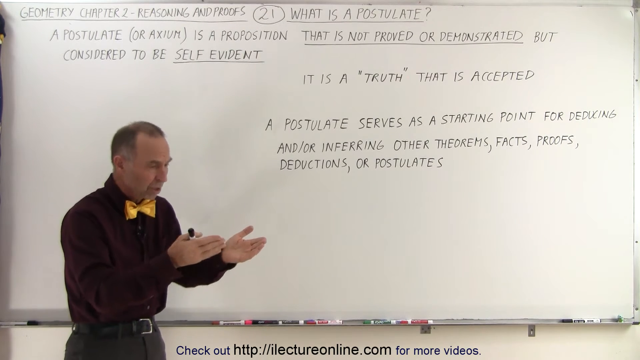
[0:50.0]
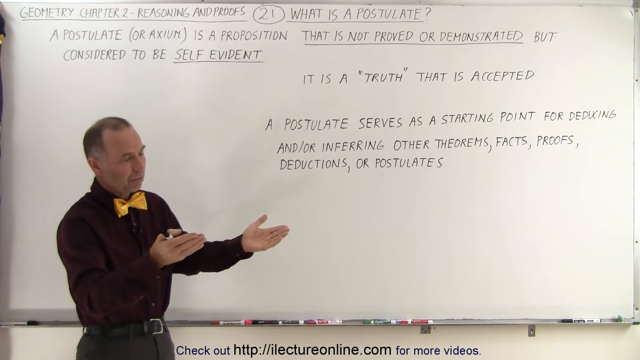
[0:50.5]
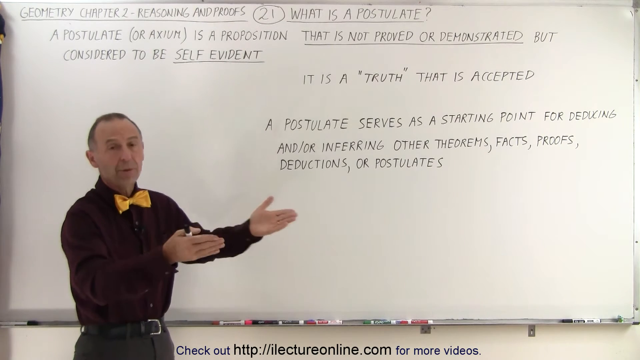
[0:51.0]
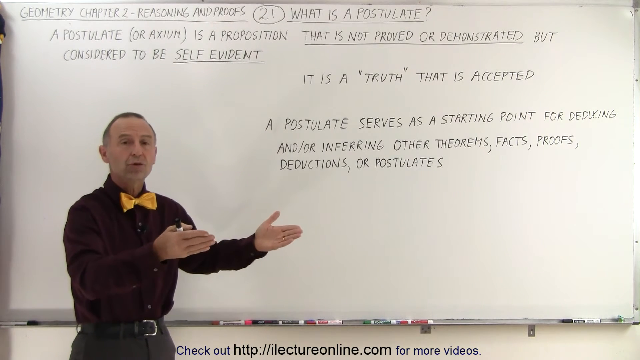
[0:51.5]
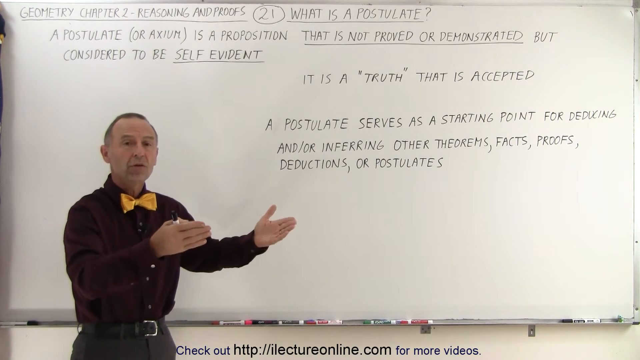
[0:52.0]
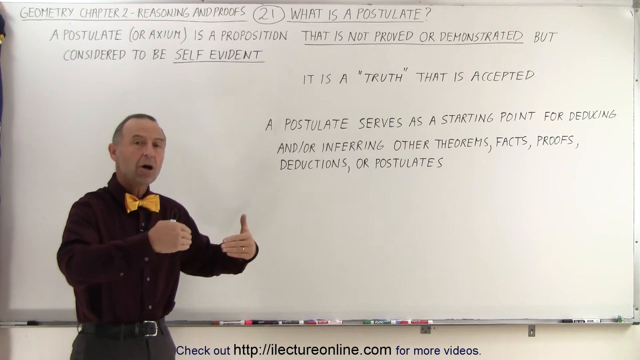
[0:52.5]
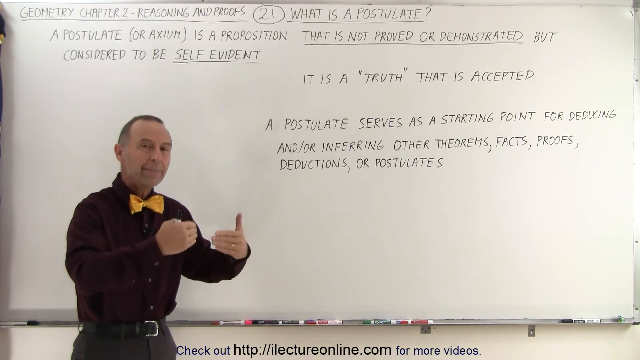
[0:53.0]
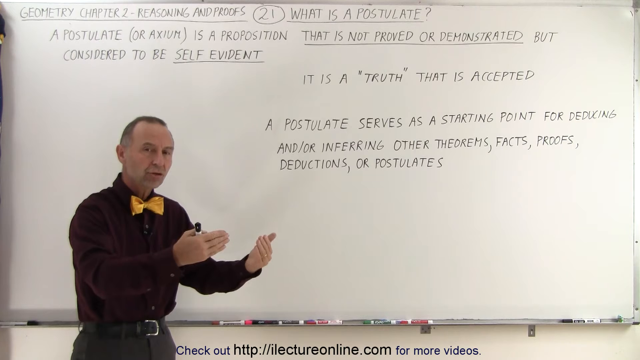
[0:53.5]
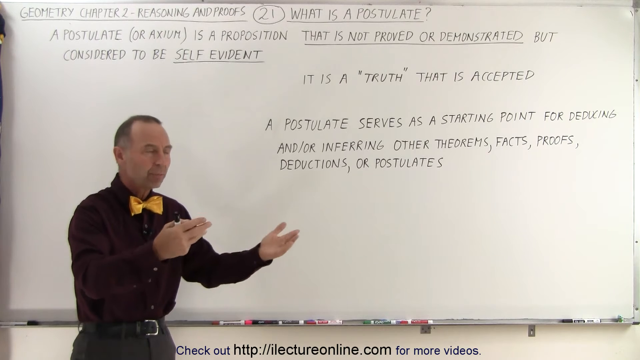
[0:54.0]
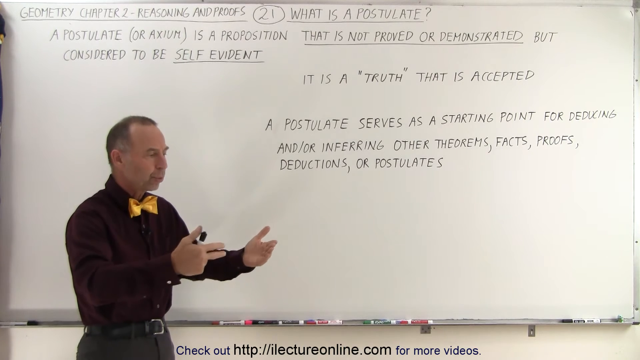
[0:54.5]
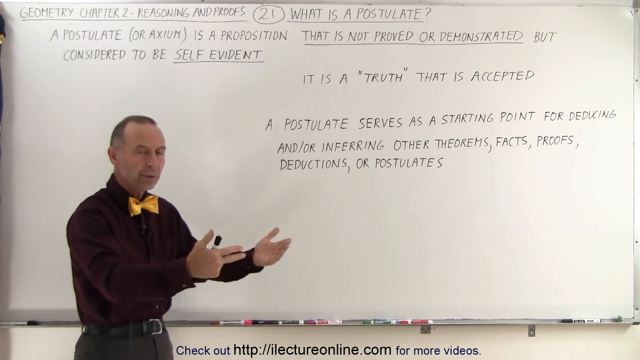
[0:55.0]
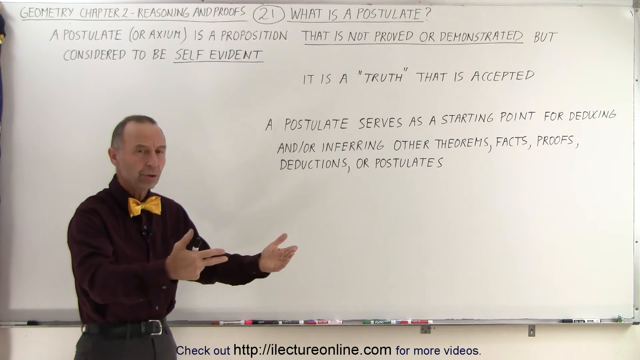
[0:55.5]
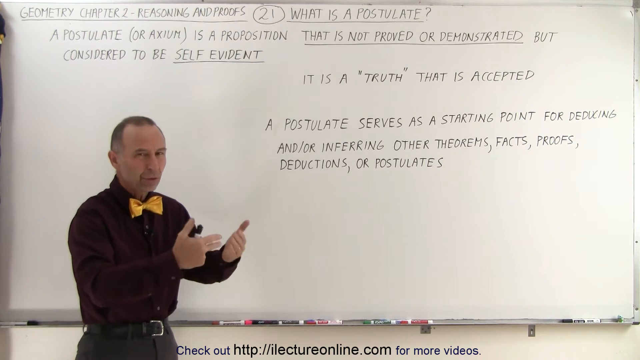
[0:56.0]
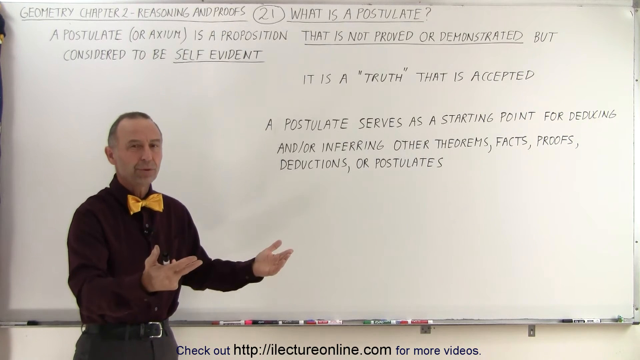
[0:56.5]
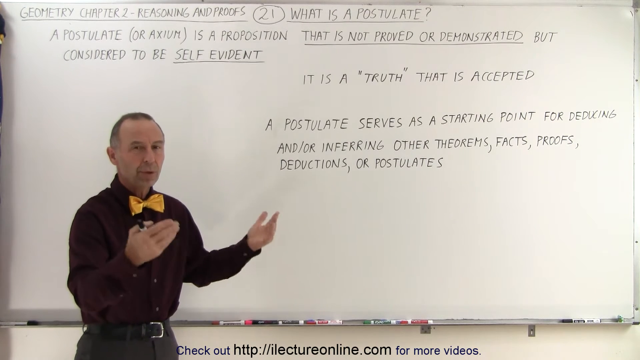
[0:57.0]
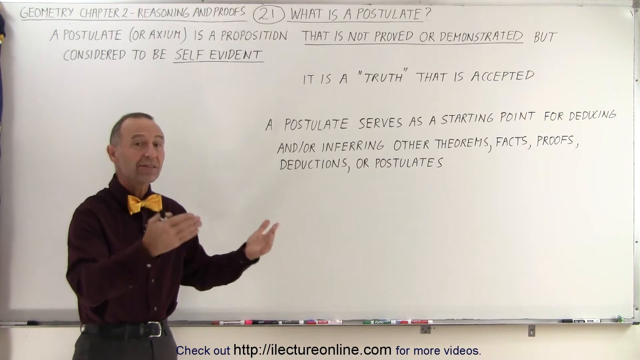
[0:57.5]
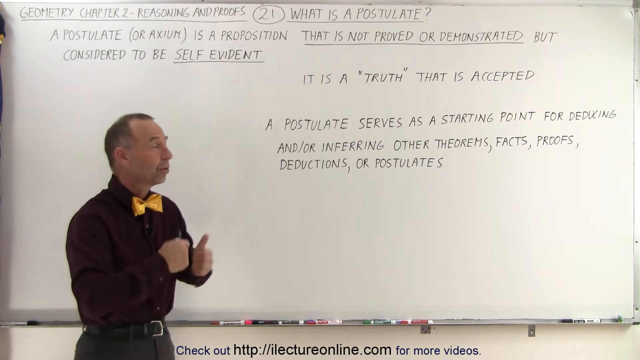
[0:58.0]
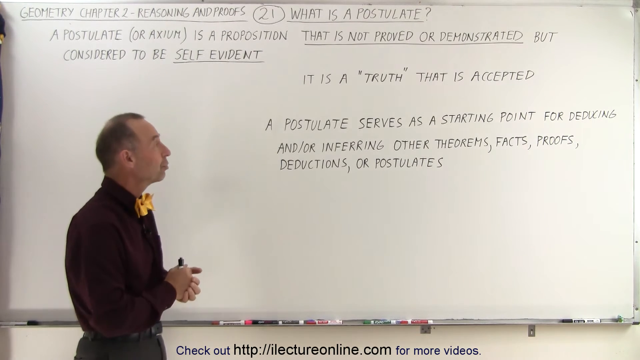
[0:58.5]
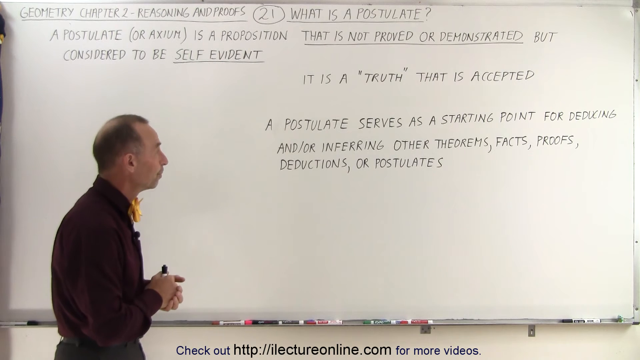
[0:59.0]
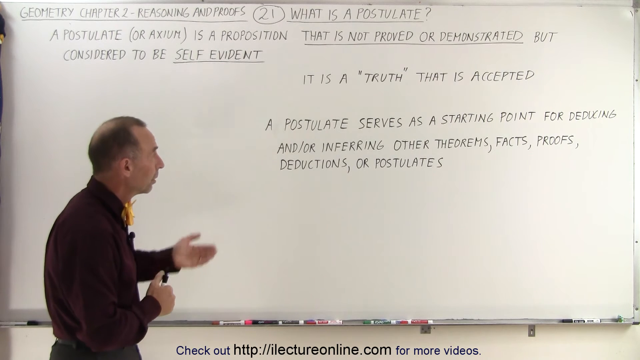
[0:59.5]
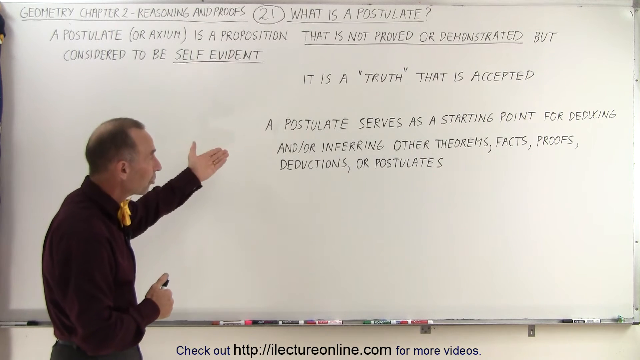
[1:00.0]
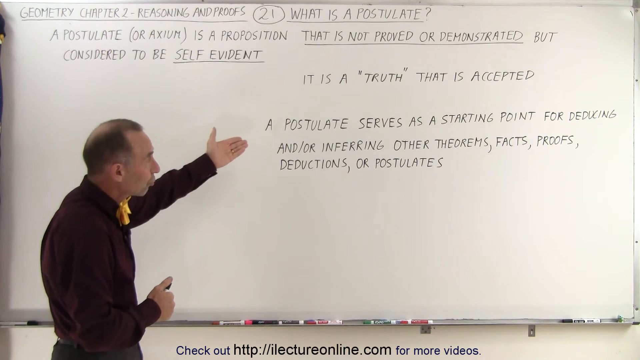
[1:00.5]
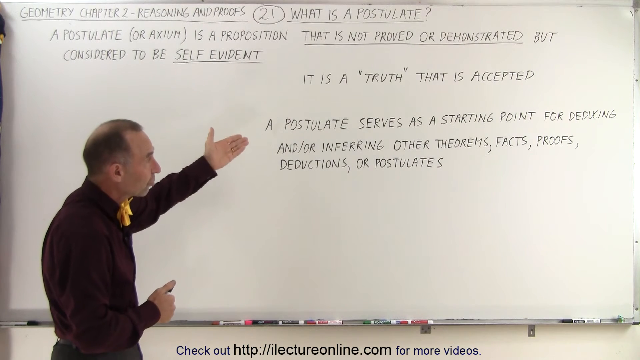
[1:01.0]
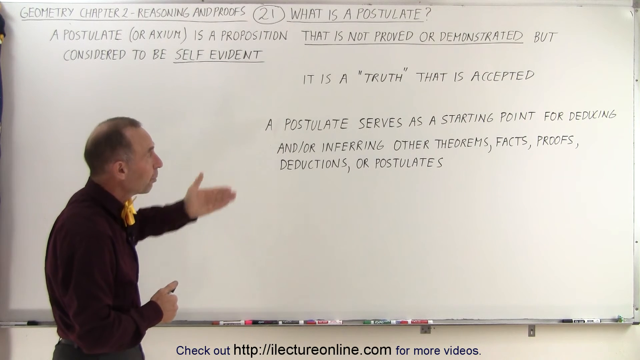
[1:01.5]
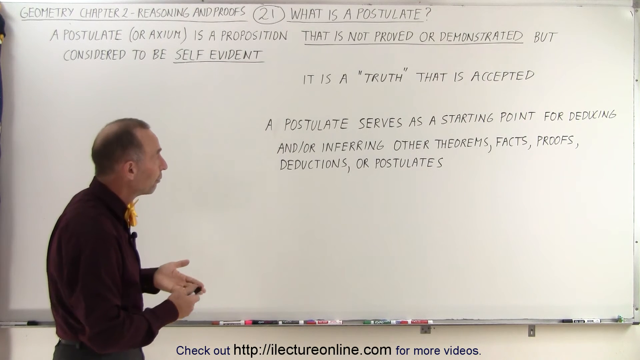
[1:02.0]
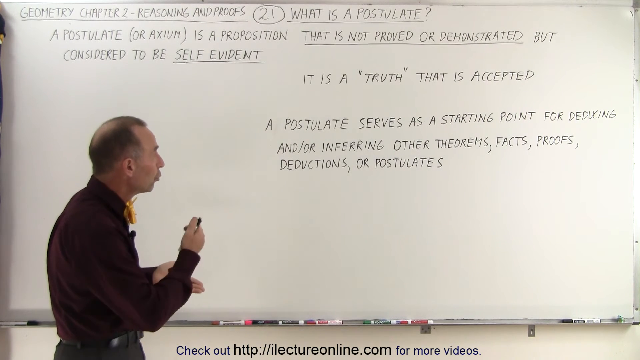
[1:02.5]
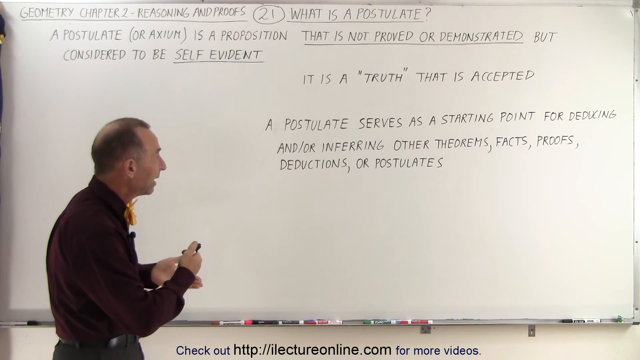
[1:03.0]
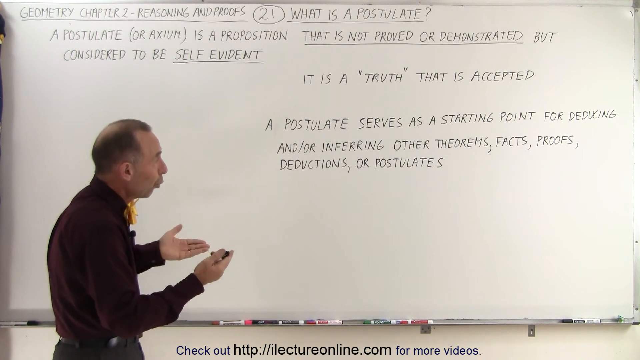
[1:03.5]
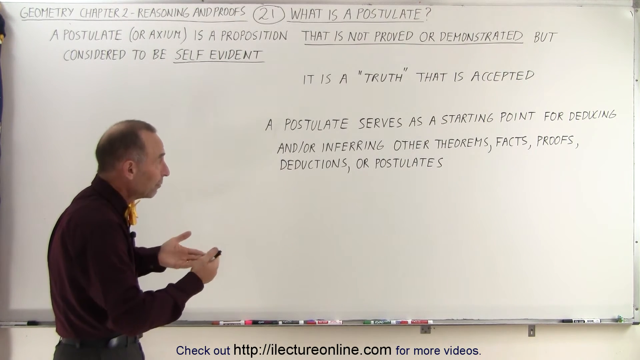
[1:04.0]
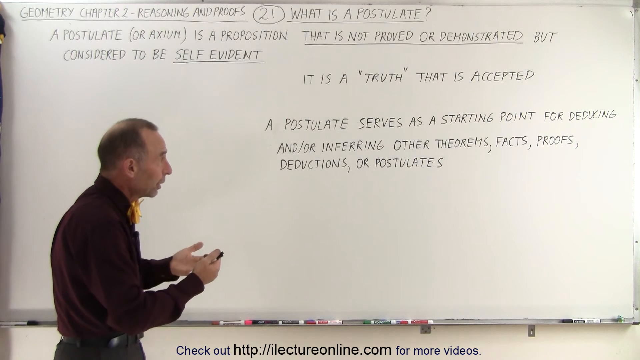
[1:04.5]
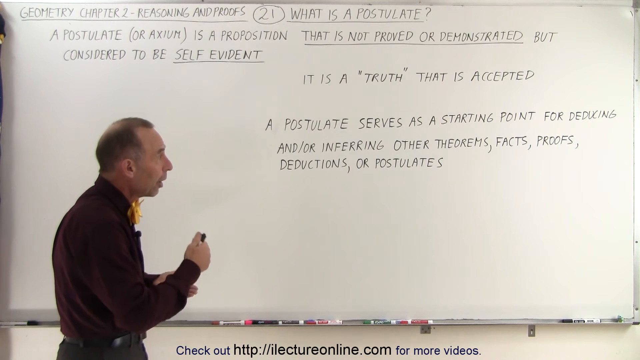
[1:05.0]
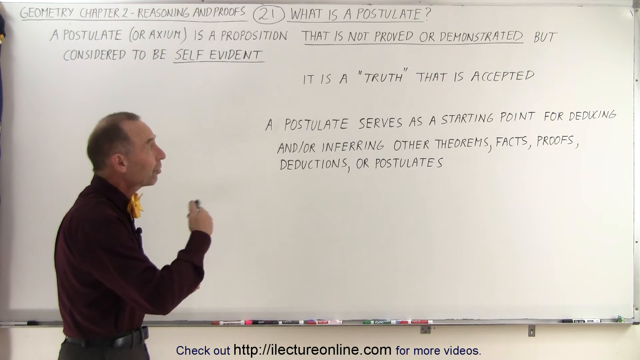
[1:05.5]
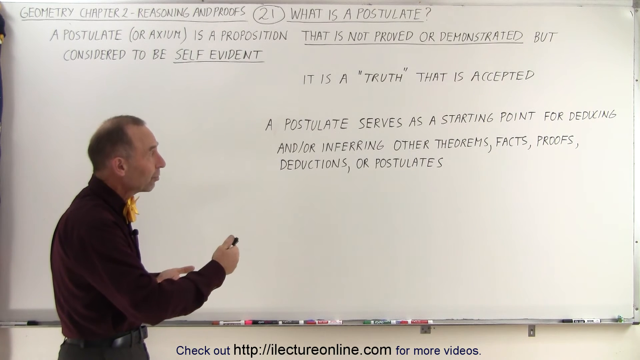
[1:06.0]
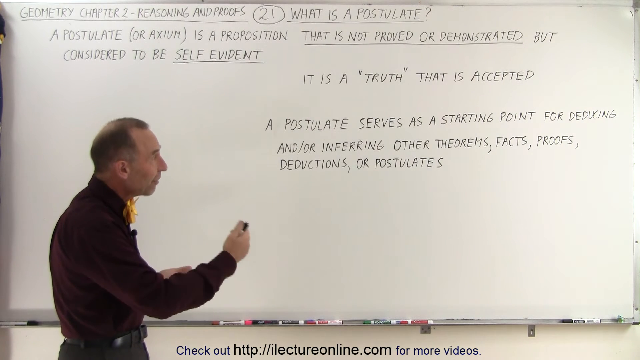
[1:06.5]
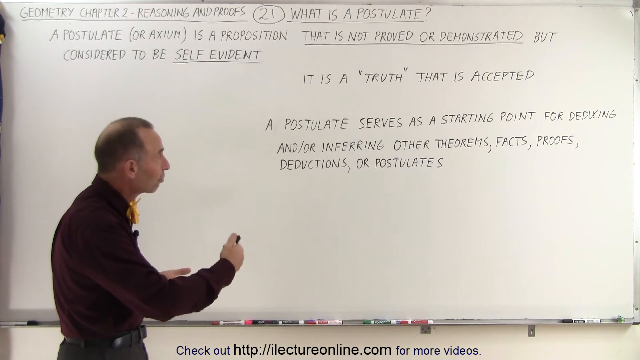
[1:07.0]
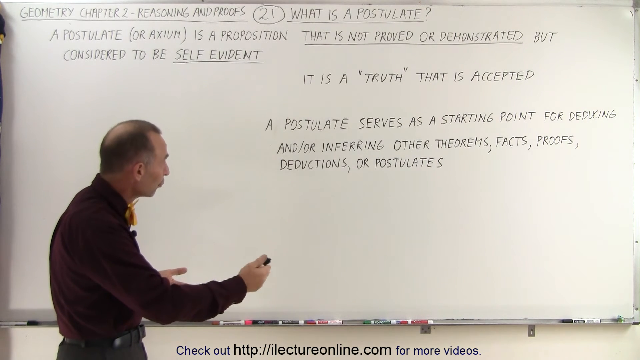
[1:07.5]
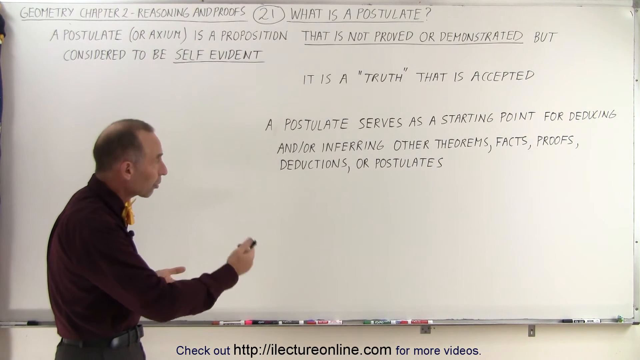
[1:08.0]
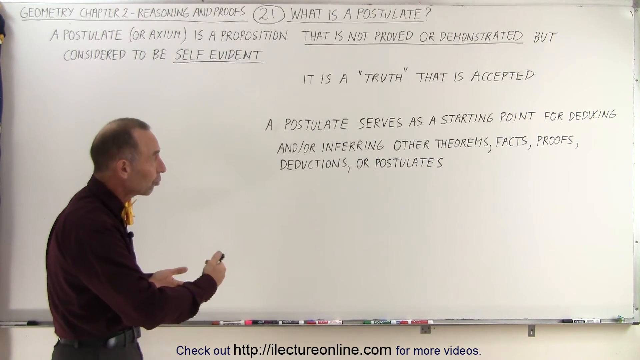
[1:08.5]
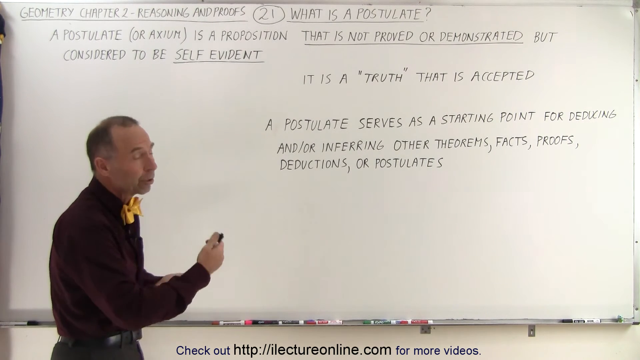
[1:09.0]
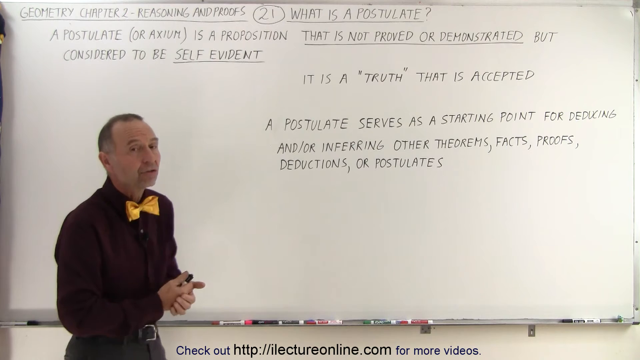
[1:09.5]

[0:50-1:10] The man, wearing his black shirt, black pants and orange bow tie, continues his talk on postulates. He is a white man and looks European. He gestures with his hands, holding them out while still holding his markers. He points at the text about a postulate serving as a starting point for deducing and inferring other theorems, facts, proofs, deductions, or postulates, and appears to be expounding on it. Nothing additional is written on the board; the writing was already there from the start, and he does not write anything. It appears to be a mounted camera recording him giving the lecture.